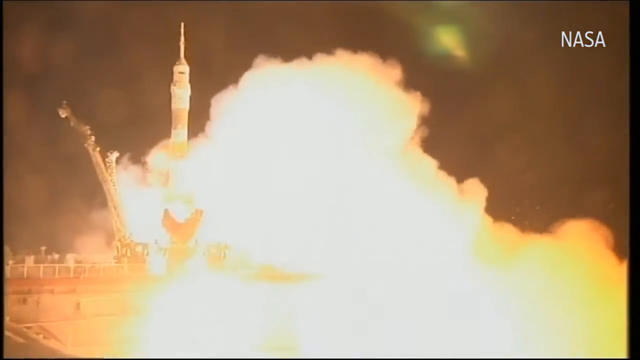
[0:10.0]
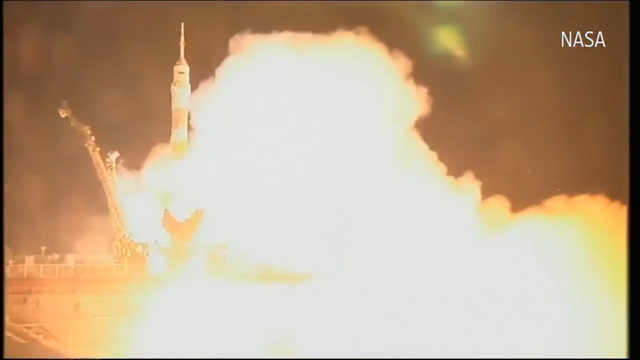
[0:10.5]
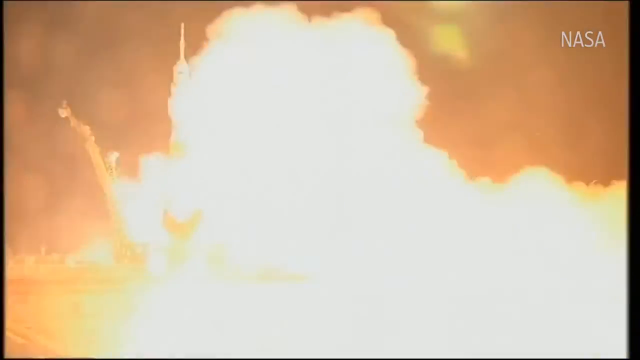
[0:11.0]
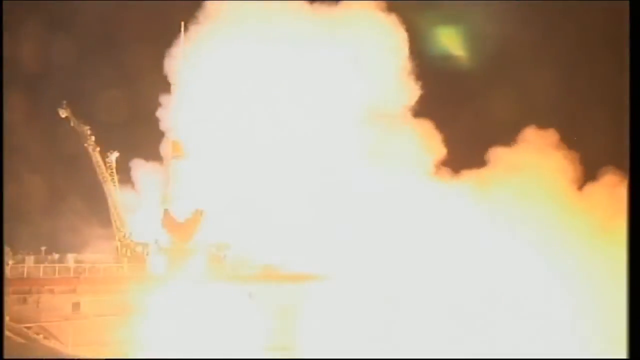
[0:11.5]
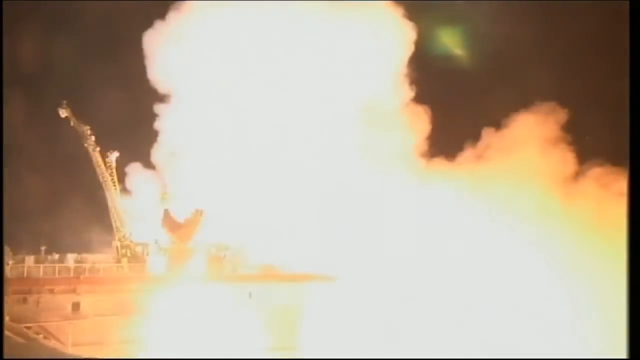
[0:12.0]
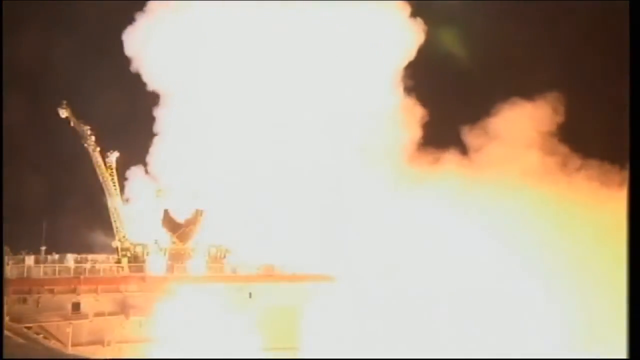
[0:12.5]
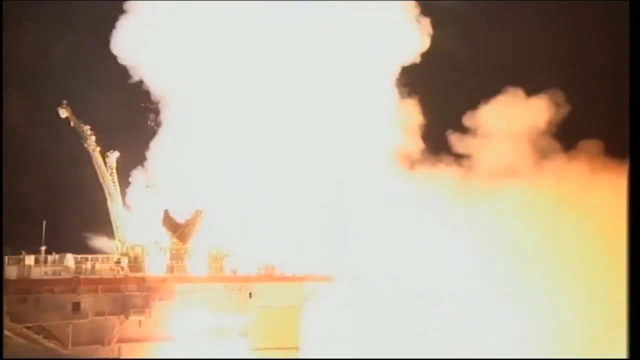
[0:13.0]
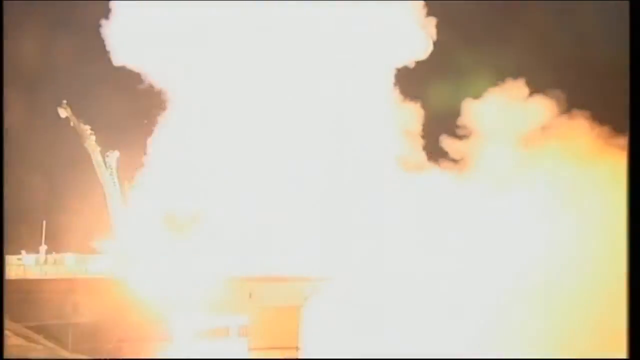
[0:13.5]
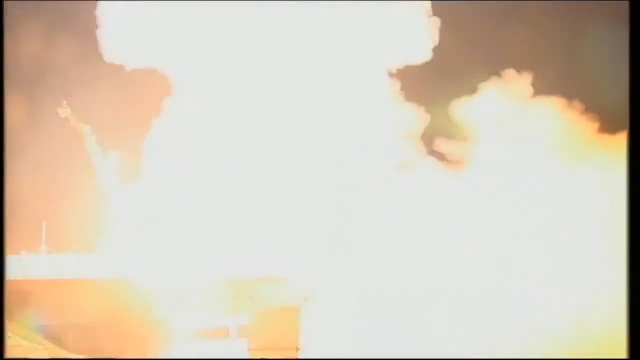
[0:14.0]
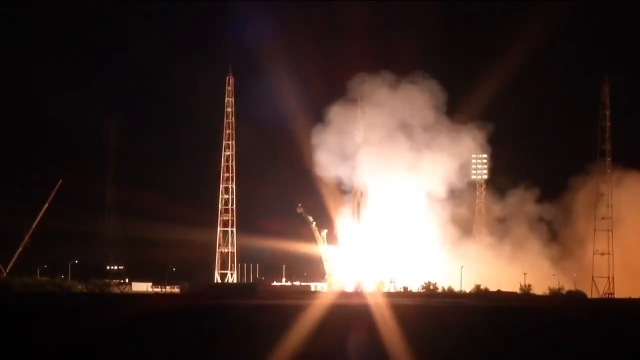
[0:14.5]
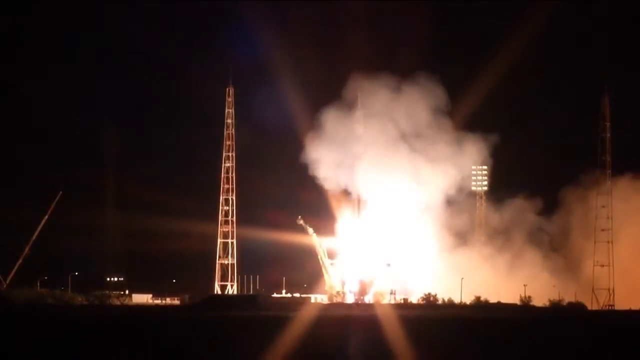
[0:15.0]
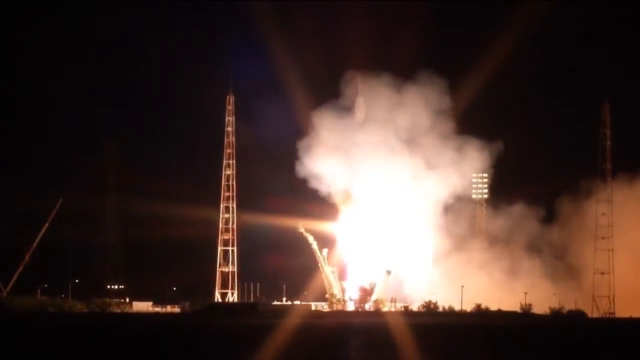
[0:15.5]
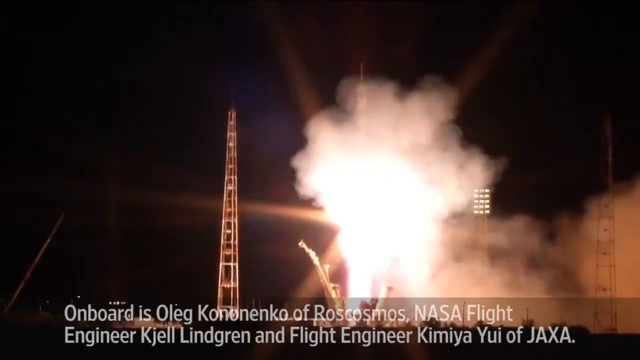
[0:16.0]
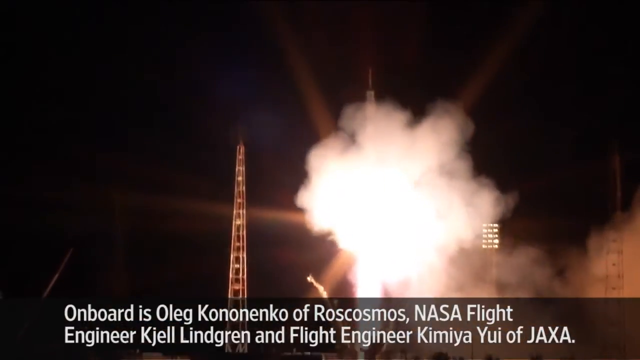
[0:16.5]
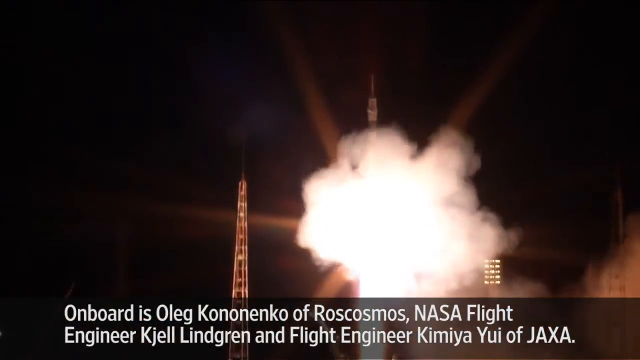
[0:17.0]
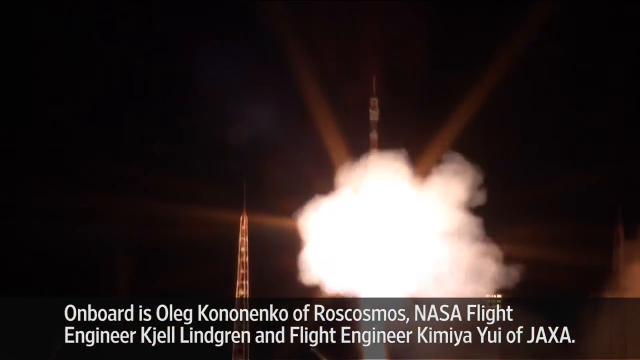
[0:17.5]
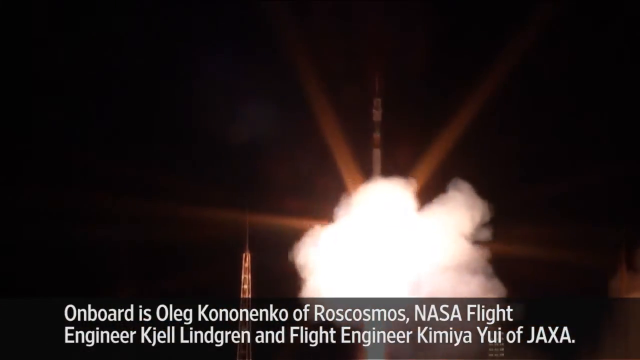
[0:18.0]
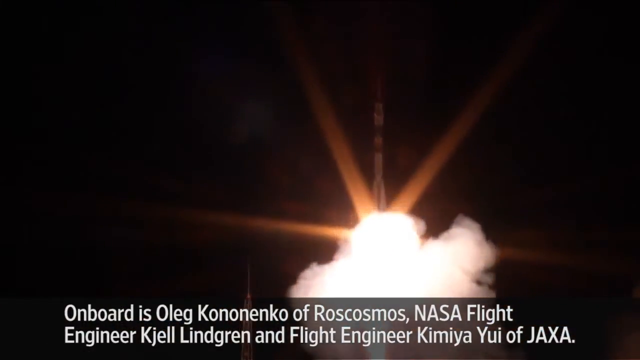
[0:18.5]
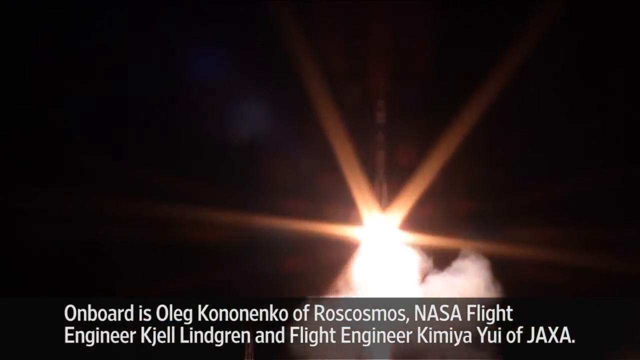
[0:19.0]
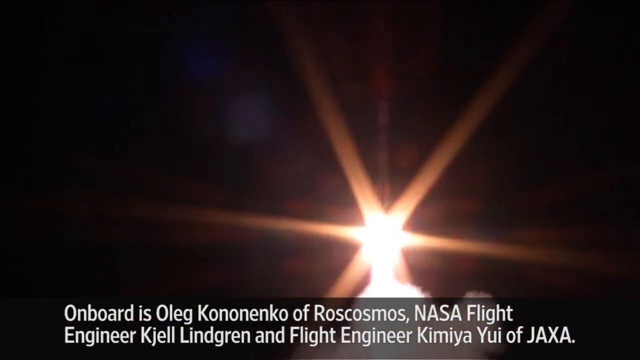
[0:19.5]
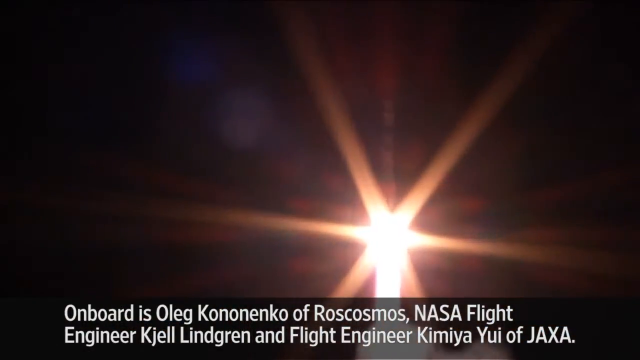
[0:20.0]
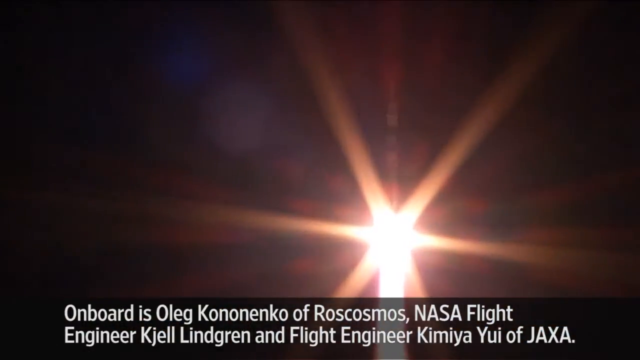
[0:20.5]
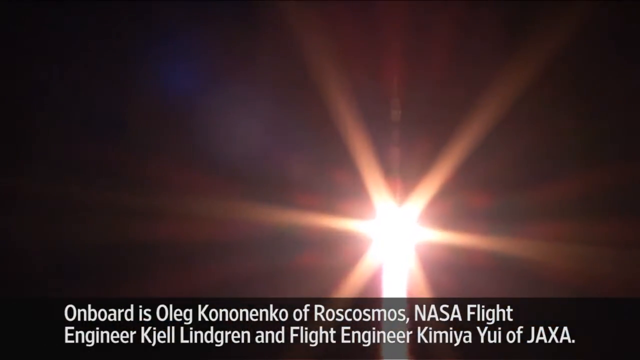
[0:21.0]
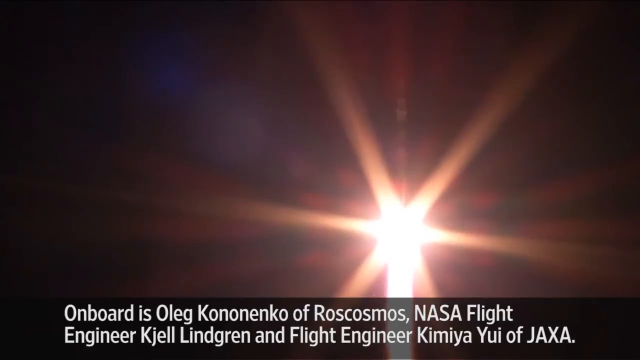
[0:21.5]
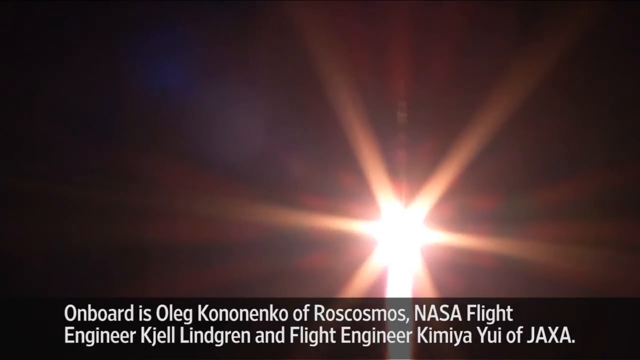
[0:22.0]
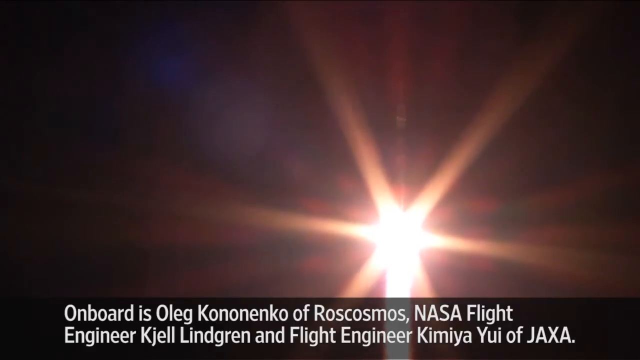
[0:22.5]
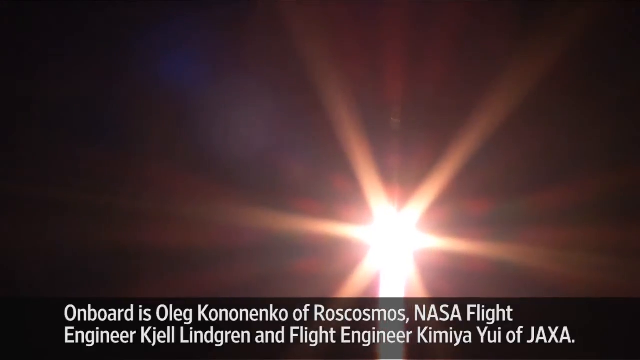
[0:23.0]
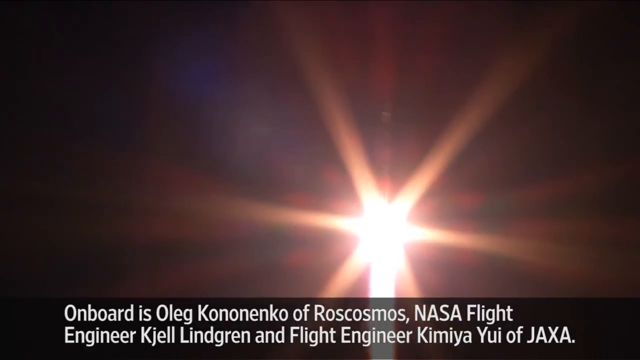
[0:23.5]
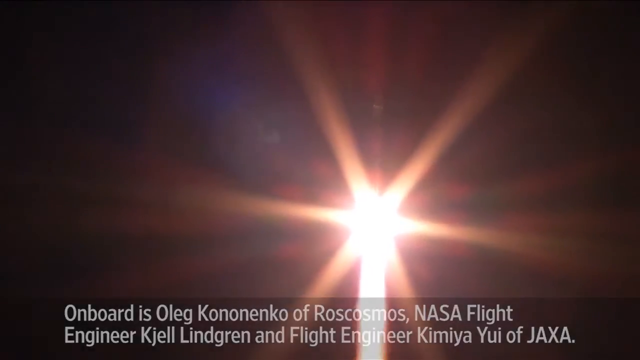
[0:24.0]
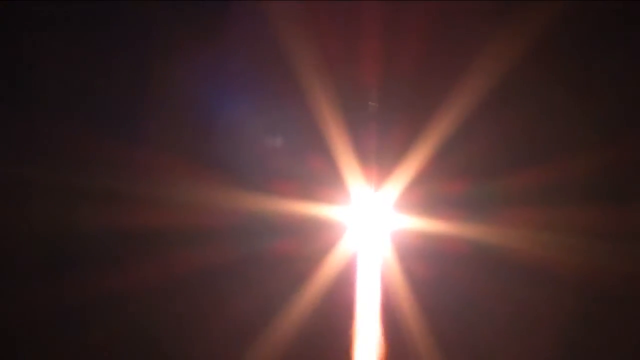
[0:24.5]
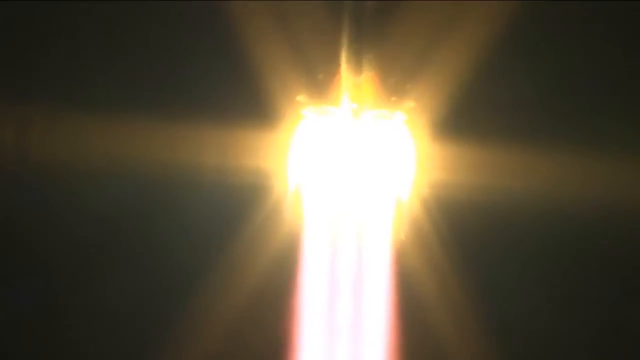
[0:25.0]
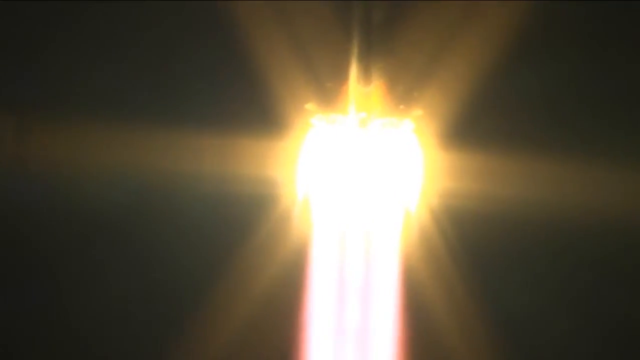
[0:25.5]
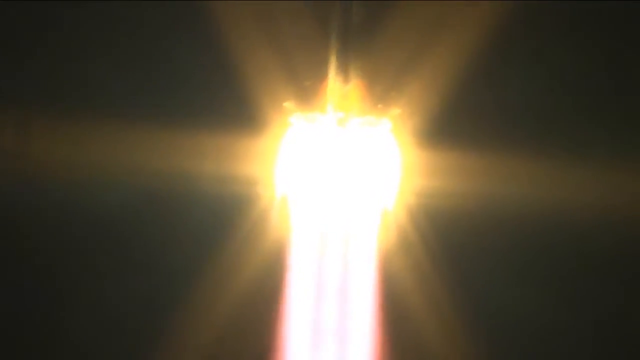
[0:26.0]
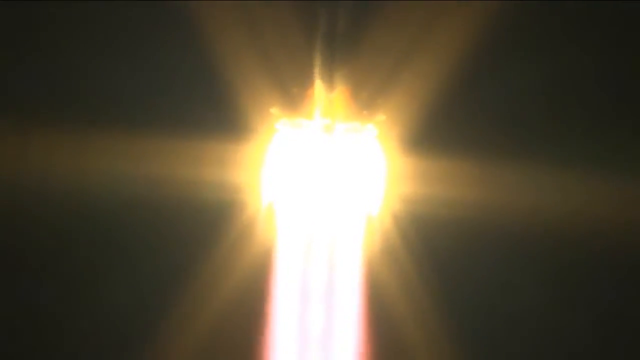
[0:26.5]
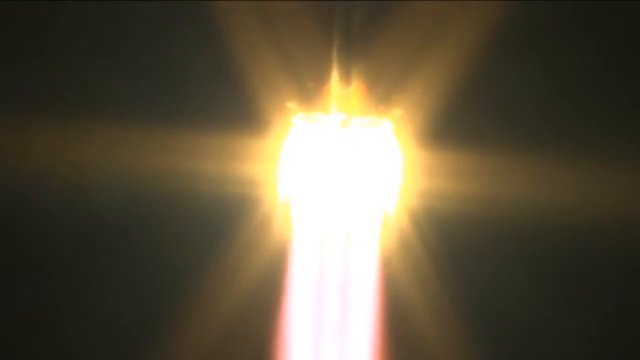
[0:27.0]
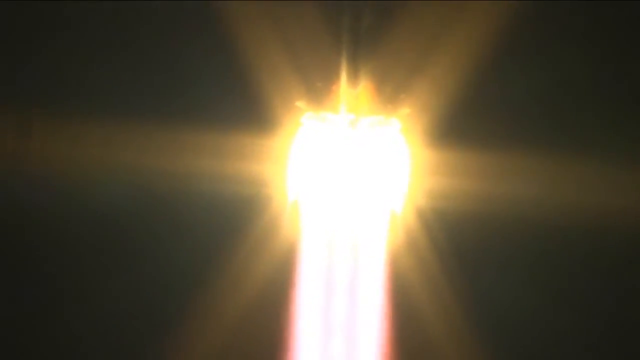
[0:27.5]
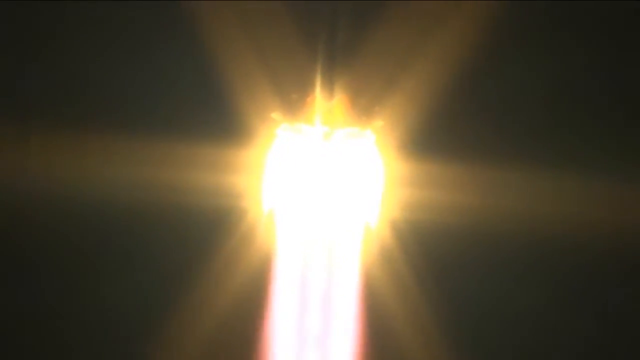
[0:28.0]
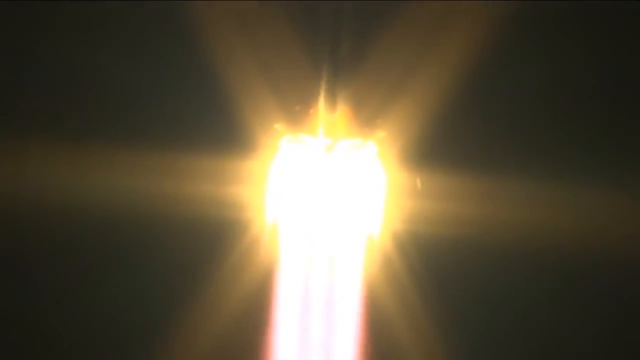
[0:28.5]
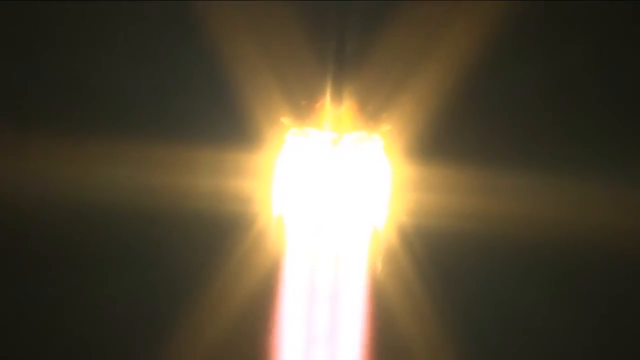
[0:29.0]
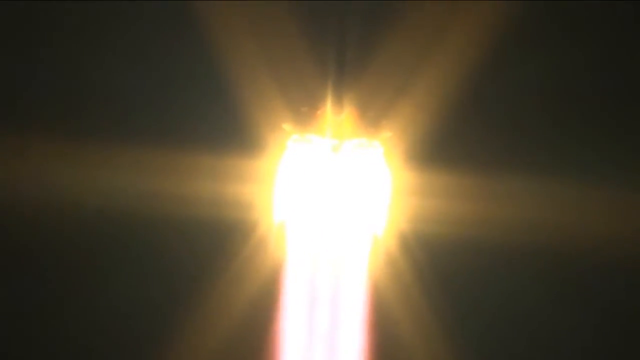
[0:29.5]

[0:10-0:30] A Russian rocket blasts off, with a huge amount of smoke billowing from its bottom as it lifts off, so much that the smoke fills the entire camera frame and little else can be seen. A new camera angle from much further away follows; here the smoke occupies only some of the frame, and the rocket emerges from beyond the frame as it rises into the sky. Beneath this, on-screen text reads "on board is Oleg Kononenko of Roscosmos, NASA flight engineer Kel Lindgren and flight engineer Kamiya Yui of JAXA." The footage then shows a star-like shape in the sky, looking directly at the rocket boosters from the ground; only the boosters are visible as they drive the rocket higher into the atmosphere. An even closer image of the boosters follows, in which the entire frame is like a brightly lit star.